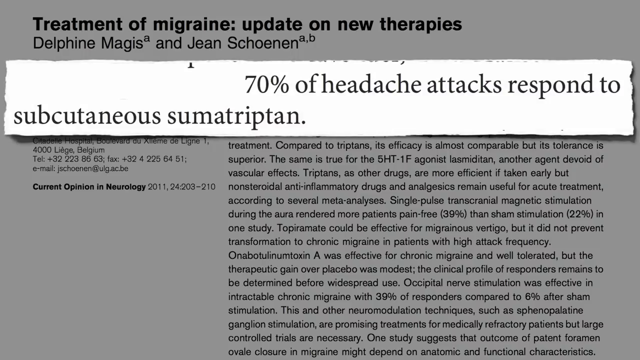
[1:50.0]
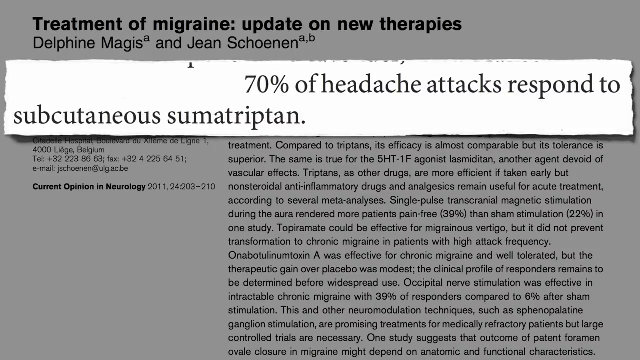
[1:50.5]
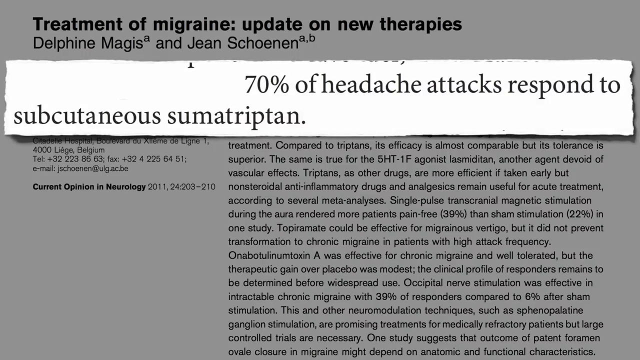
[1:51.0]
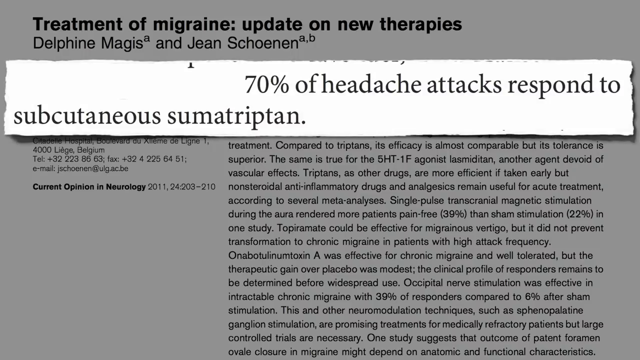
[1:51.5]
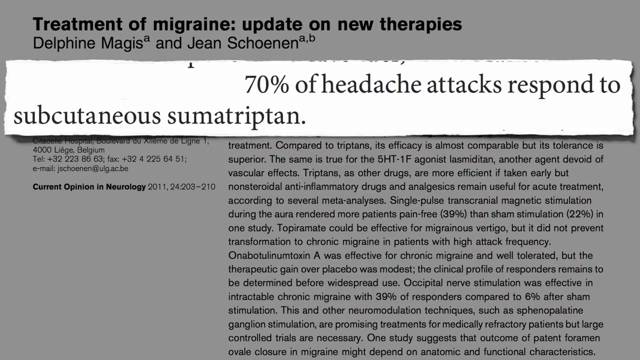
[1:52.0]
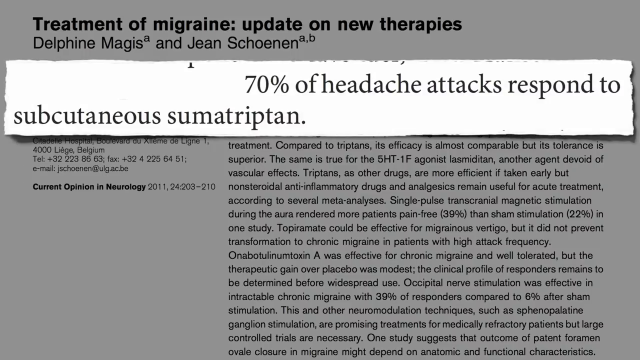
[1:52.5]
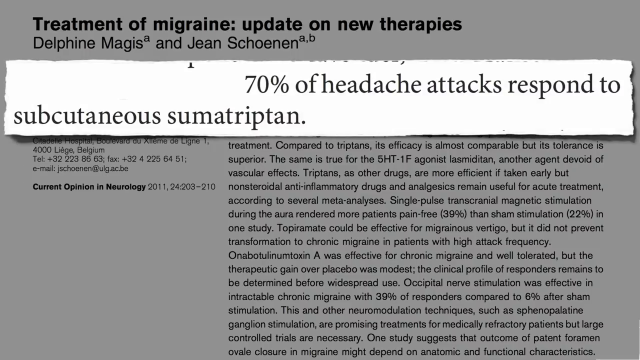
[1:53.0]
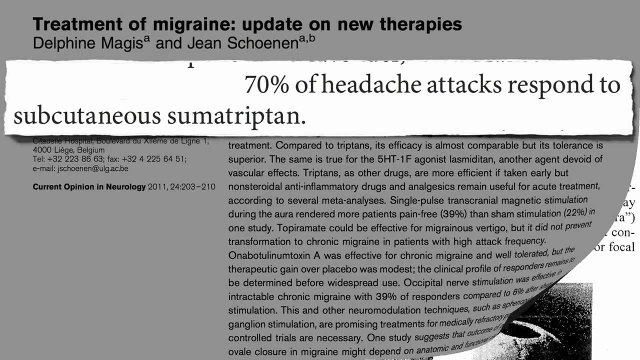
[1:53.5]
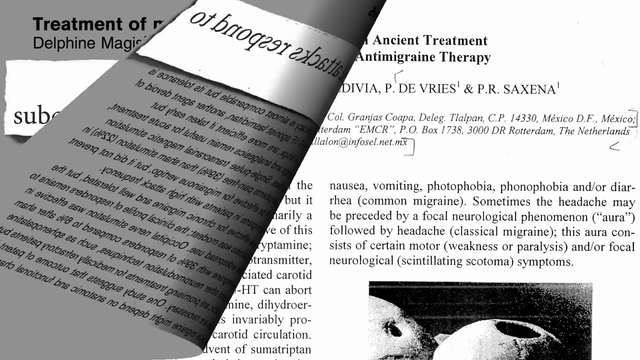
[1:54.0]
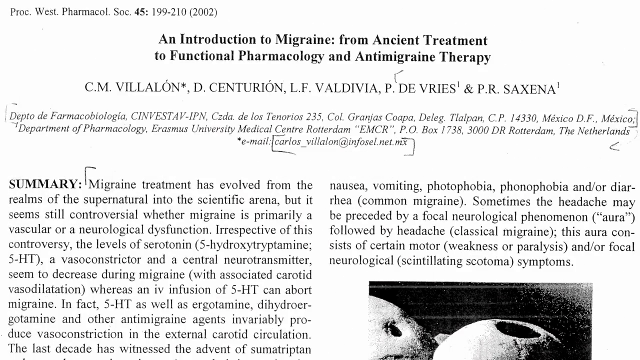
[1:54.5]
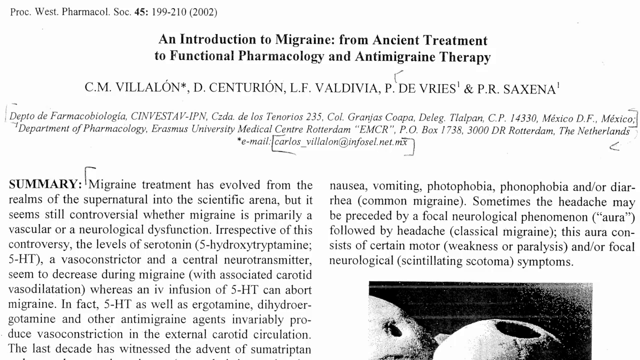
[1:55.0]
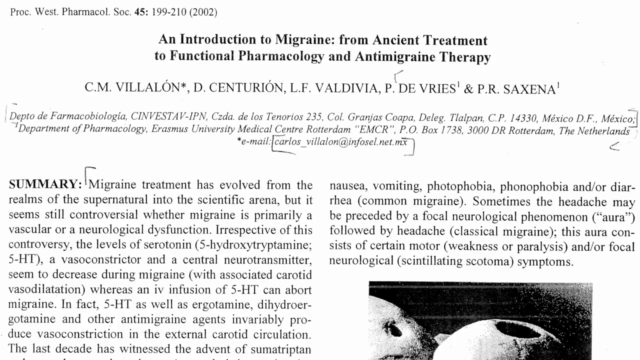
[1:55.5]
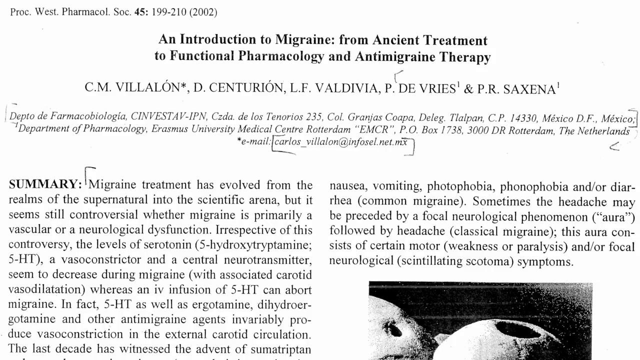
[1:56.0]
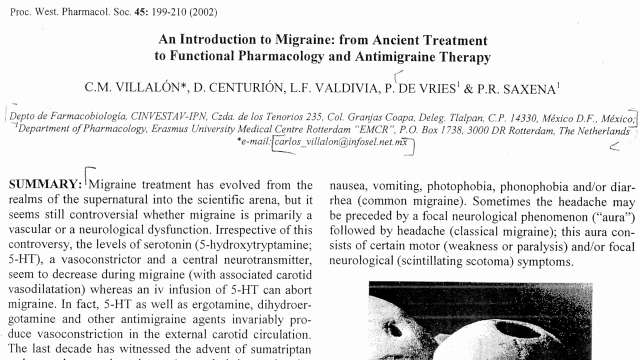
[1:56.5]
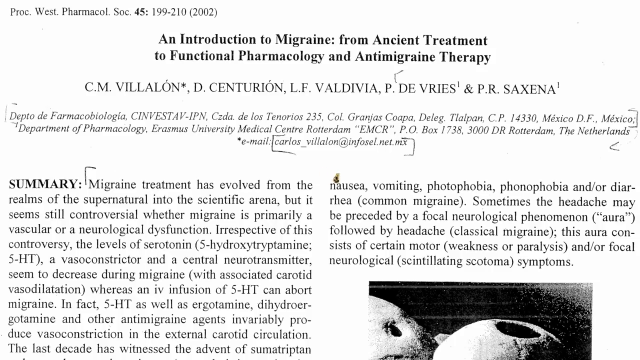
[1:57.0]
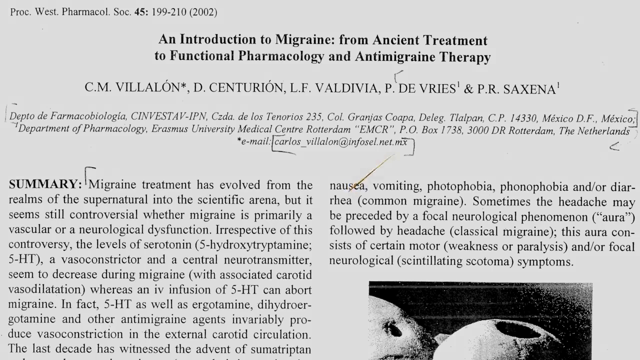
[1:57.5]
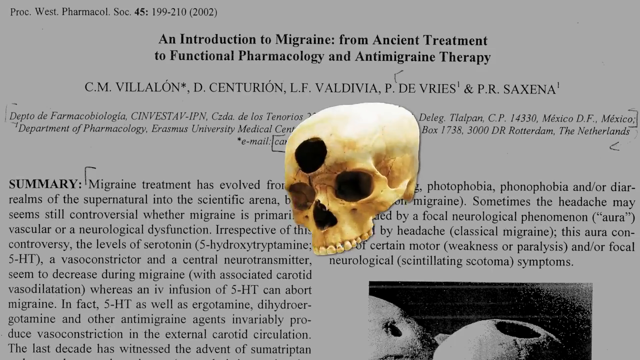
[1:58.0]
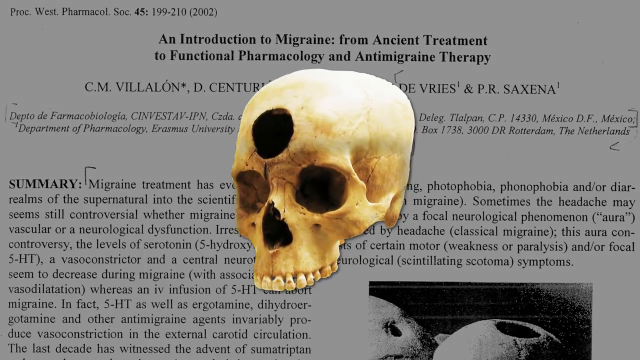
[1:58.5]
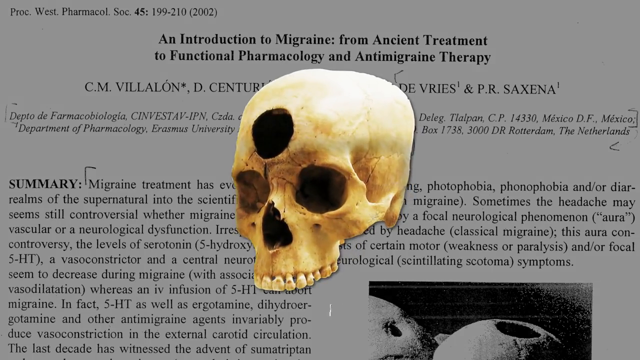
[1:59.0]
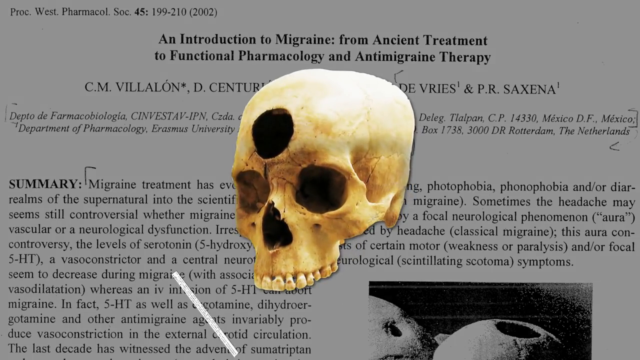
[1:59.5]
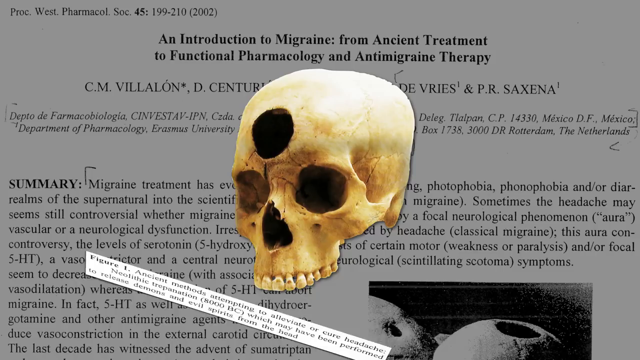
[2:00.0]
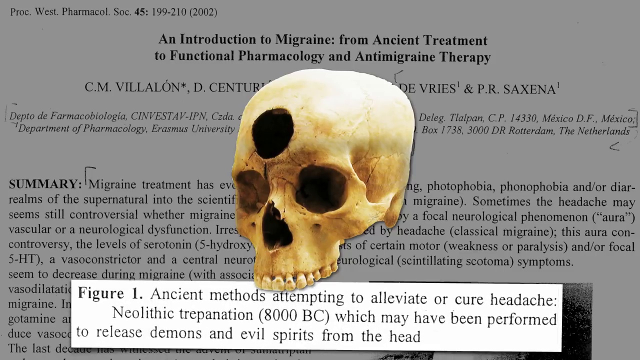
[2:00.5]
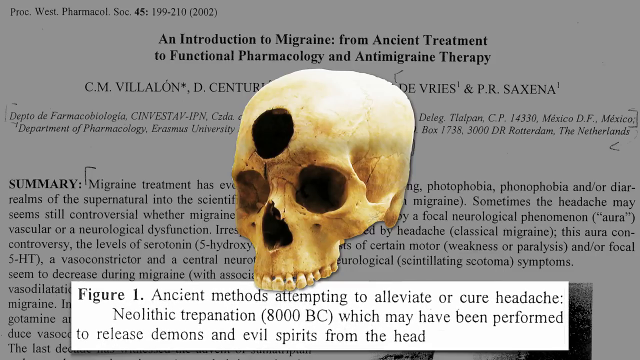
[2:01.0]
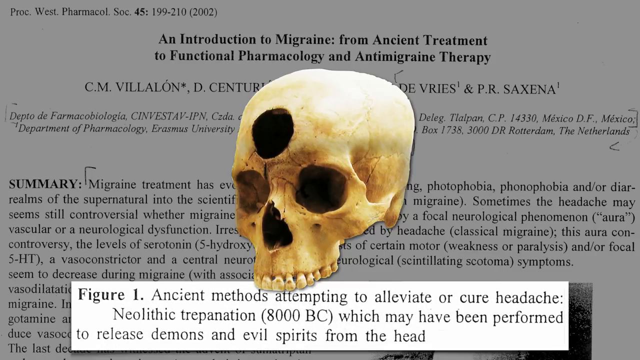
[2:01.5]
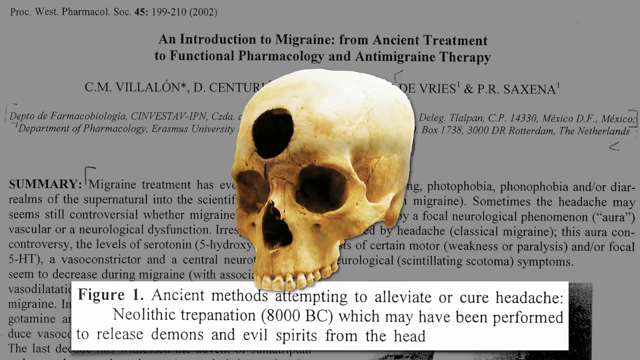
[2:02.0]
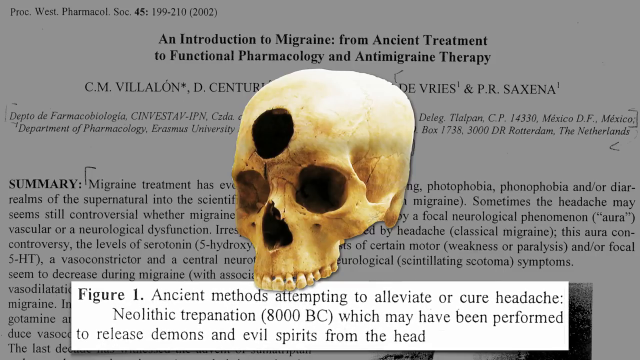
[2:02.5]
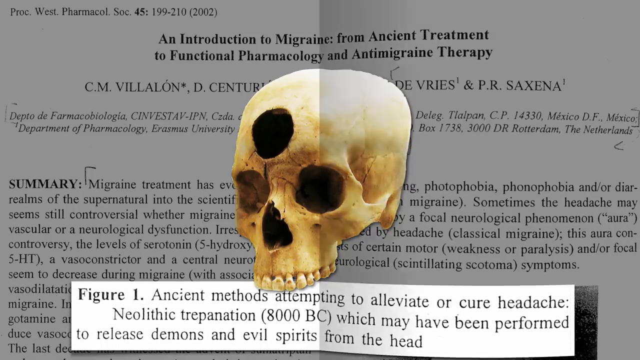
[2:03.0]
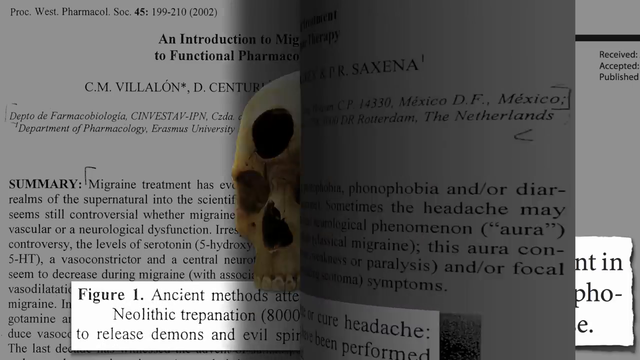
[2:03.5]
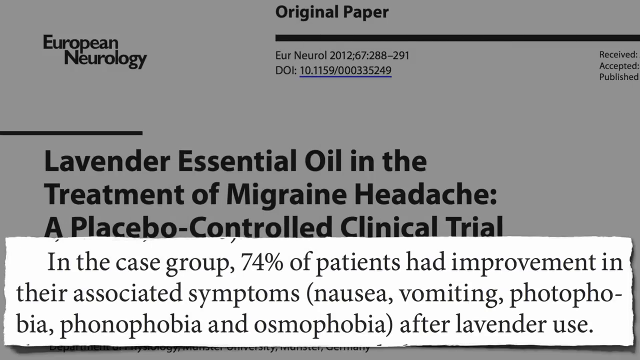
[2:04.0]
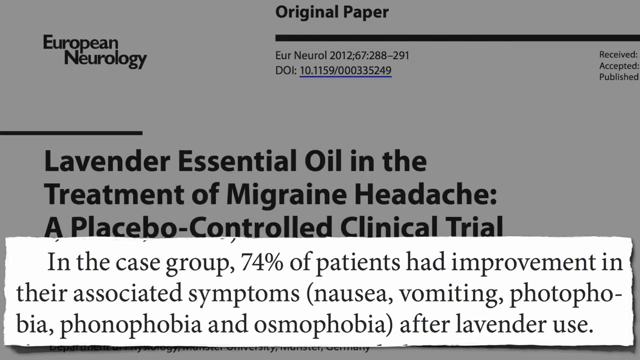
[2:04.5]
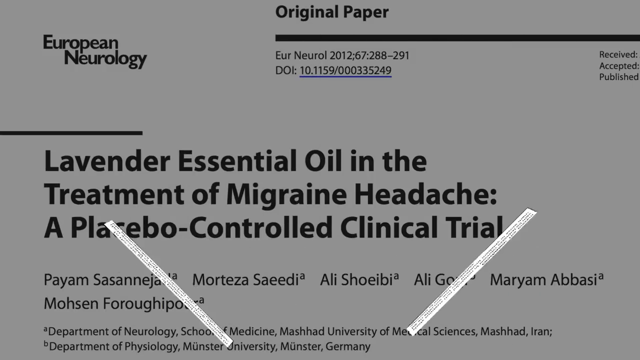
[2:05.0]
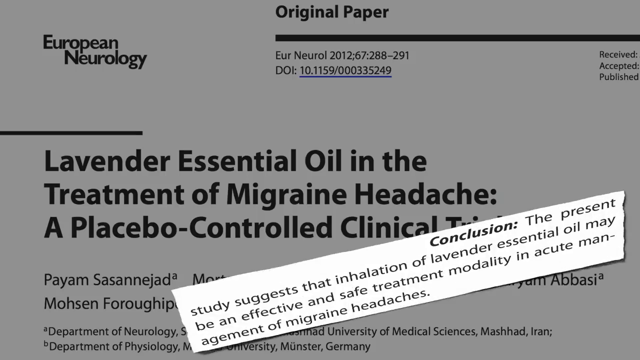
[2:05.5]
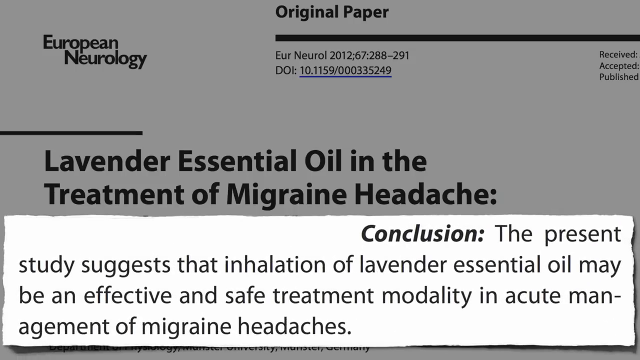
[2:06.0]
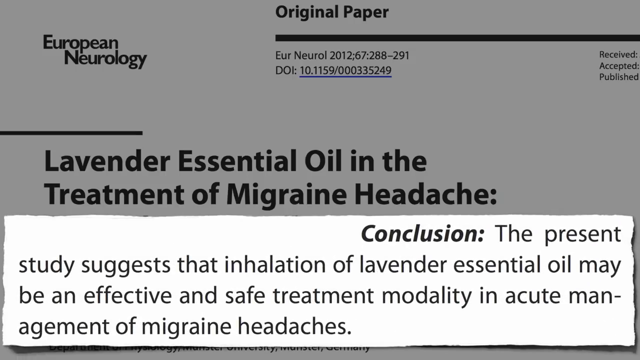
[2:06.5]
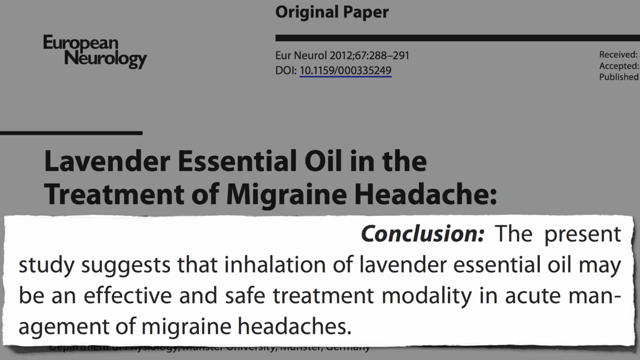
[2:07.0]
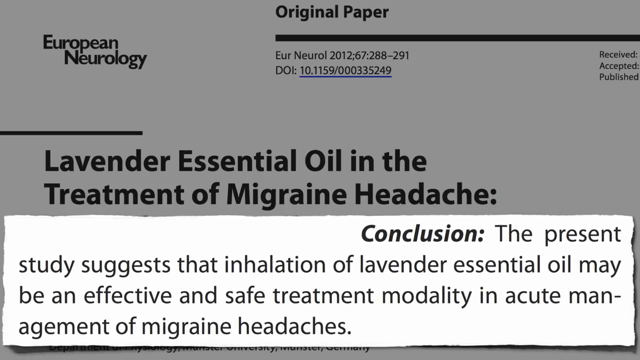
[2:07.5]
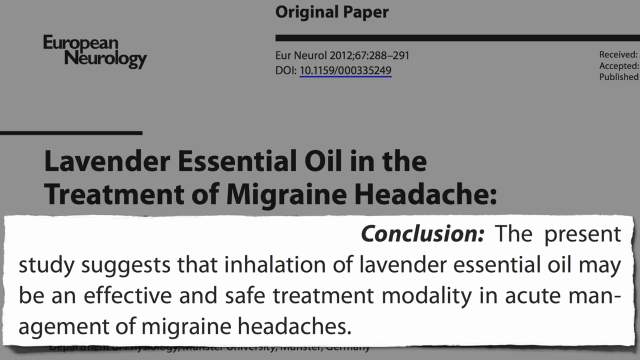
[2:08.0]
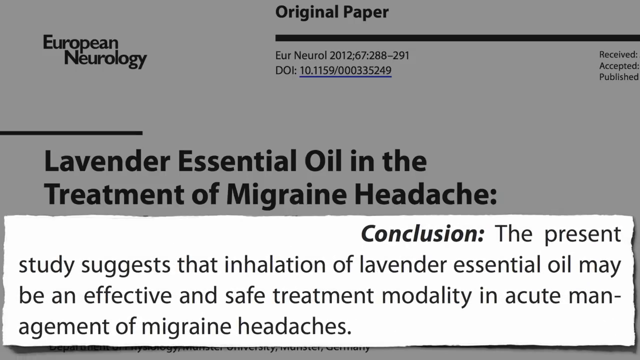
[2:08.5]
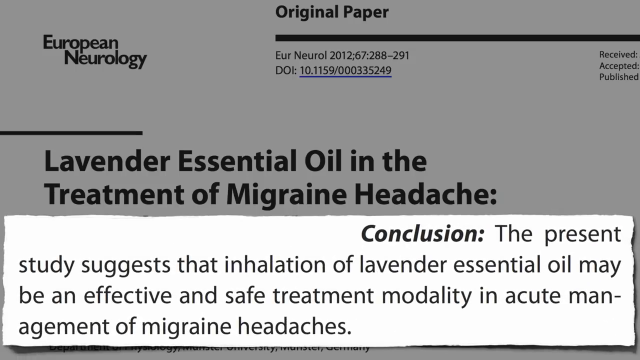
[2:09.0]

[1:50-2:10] A highlighted article section reads "70% of headache attacks respond to subcutaneous sumatriptan". The page peels away to another journal article titled "An Introduction to Migraine from Ancient Treatment to Functional Pharmacology and Antimigraine Therapy". An image of a skull missing its lower jaw pops up on the screen, almost turning as it appears. The two eye sockets and the nasal cavity are visible, along with a large hole in the forehead of the skull. Below it, an enlarged part of the article reads "figure one, ancient methods attempting to alleviate or cure headache", followed by a Neolithic entry, "8,000 BC, which may have been performed to release demons and evil spirits from the head". The page then turns, this time in the normal reading direction, back to the lavender essential oil in the treatment of migraine headache journal, and its conclusion pops up on the screen, suggesting that inhalation of lavender essential oil may be an effective and safe treatment in the acute management of migraines.